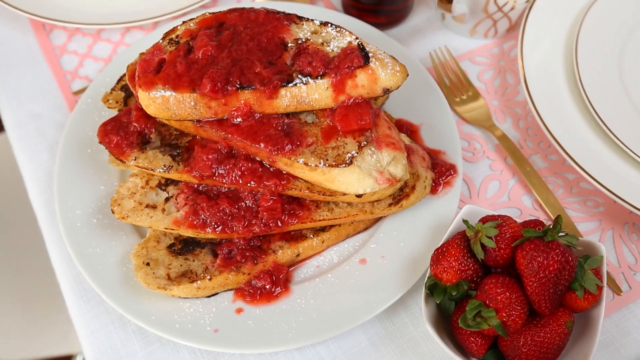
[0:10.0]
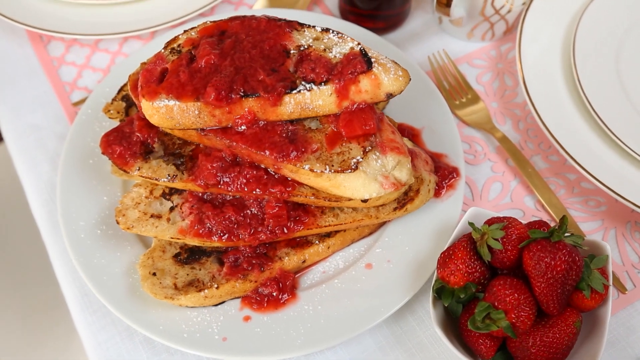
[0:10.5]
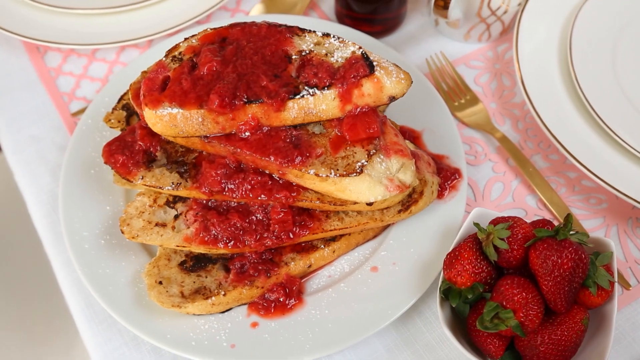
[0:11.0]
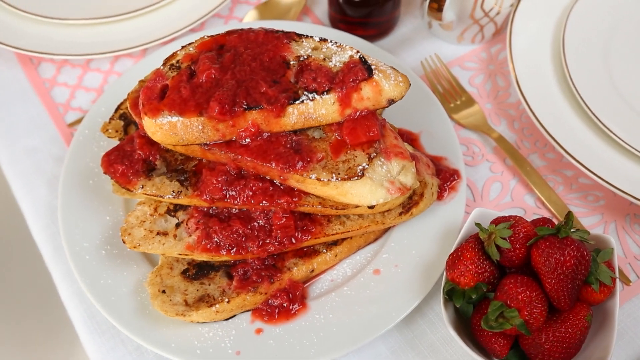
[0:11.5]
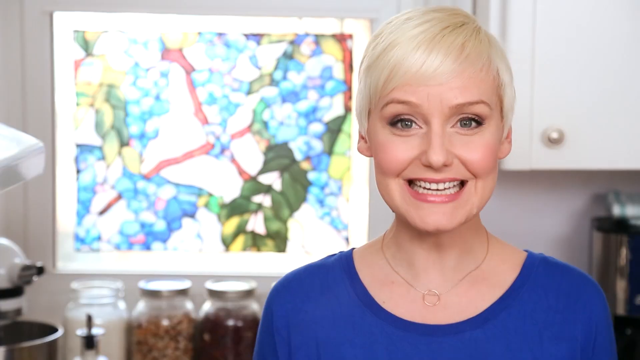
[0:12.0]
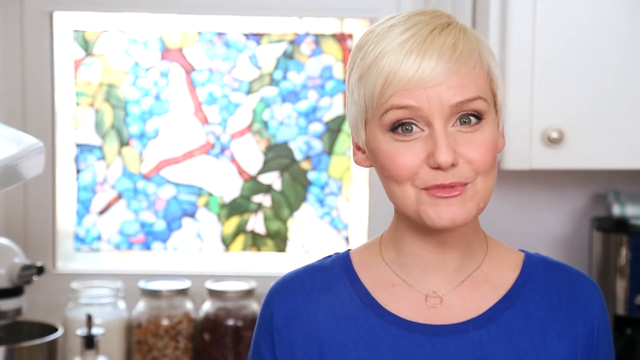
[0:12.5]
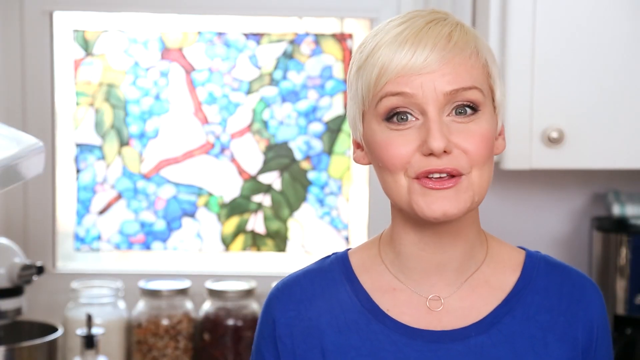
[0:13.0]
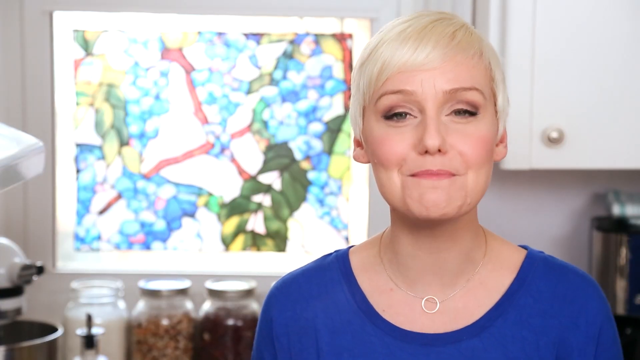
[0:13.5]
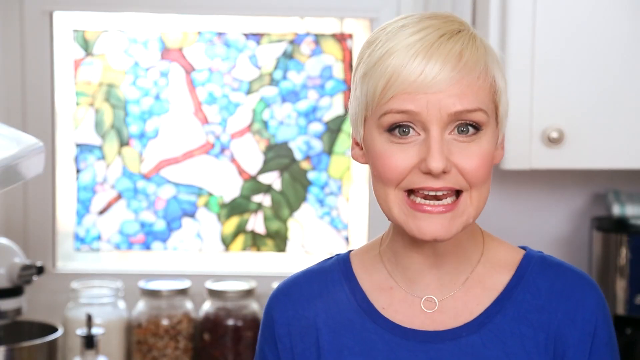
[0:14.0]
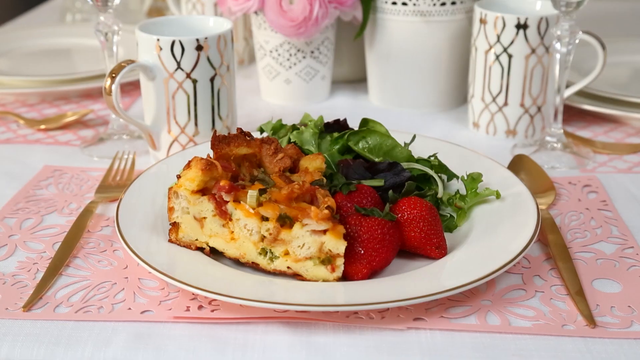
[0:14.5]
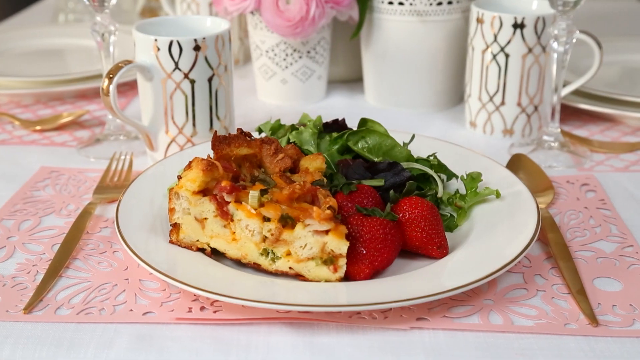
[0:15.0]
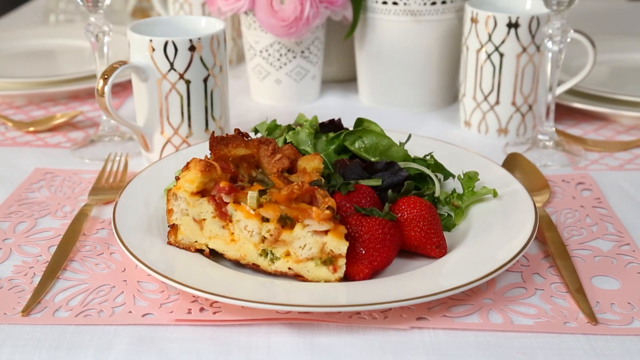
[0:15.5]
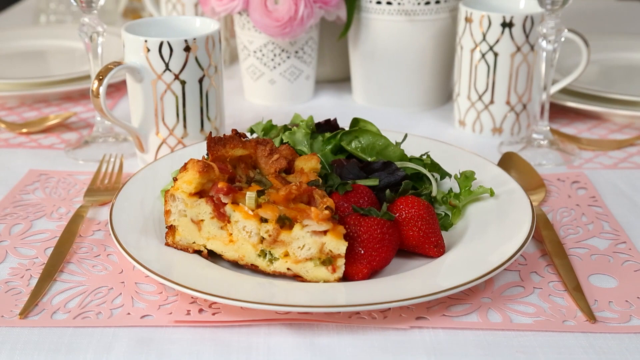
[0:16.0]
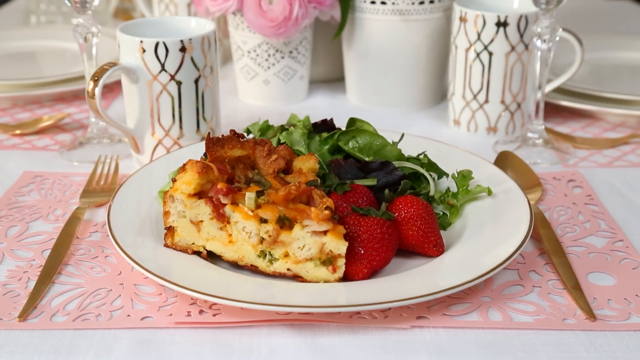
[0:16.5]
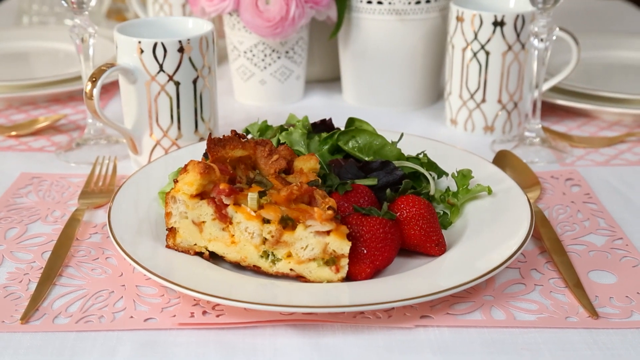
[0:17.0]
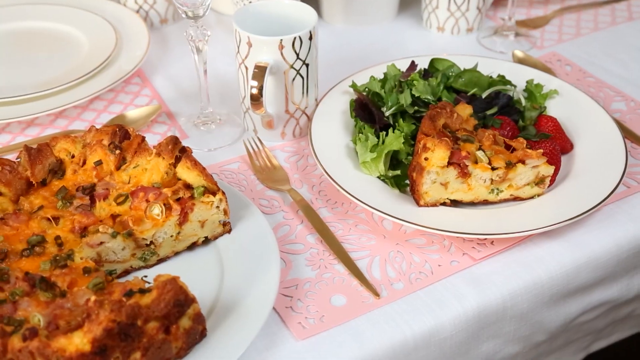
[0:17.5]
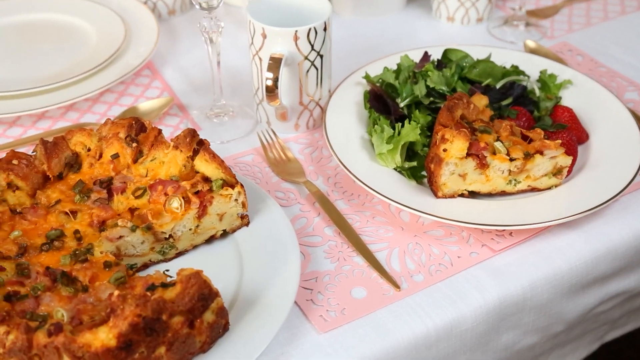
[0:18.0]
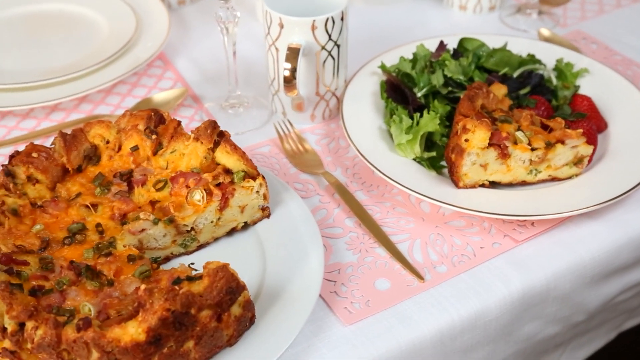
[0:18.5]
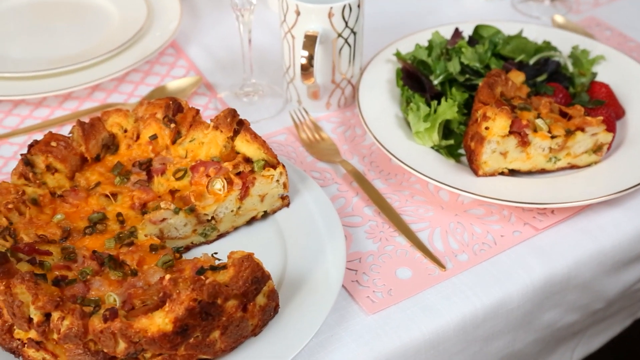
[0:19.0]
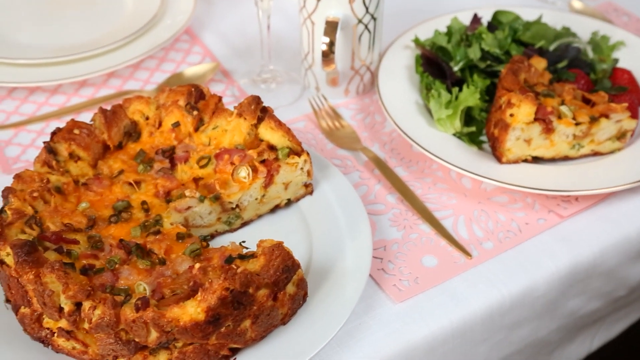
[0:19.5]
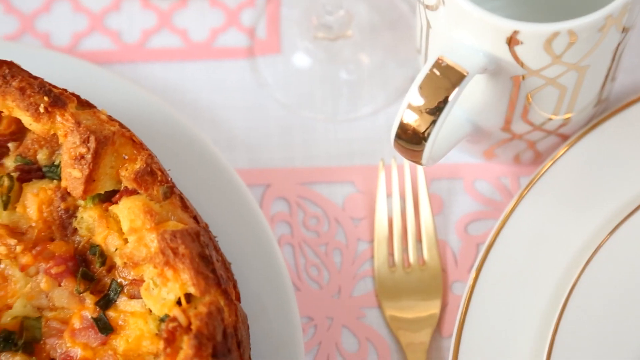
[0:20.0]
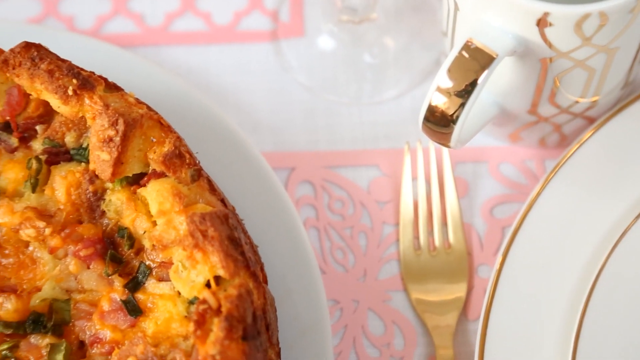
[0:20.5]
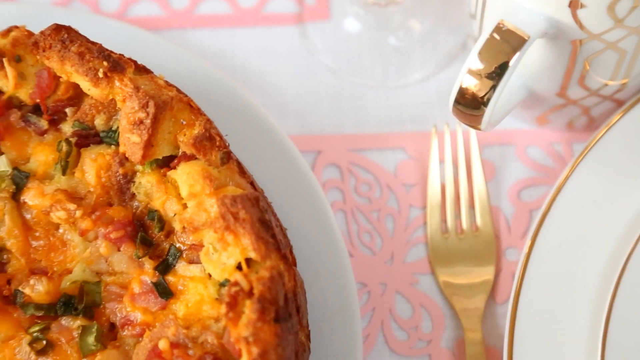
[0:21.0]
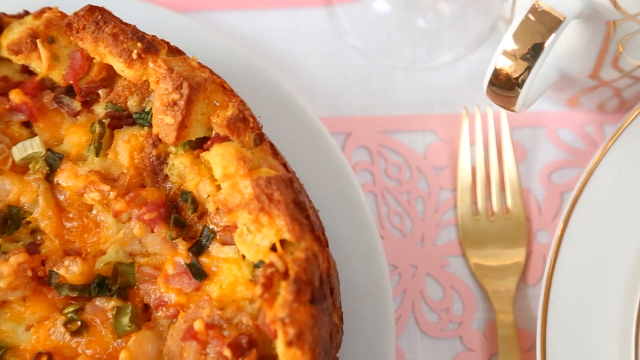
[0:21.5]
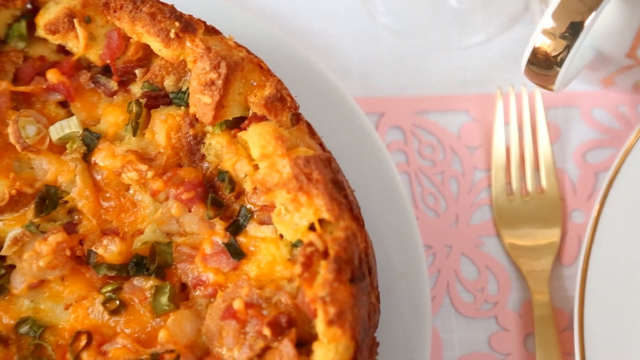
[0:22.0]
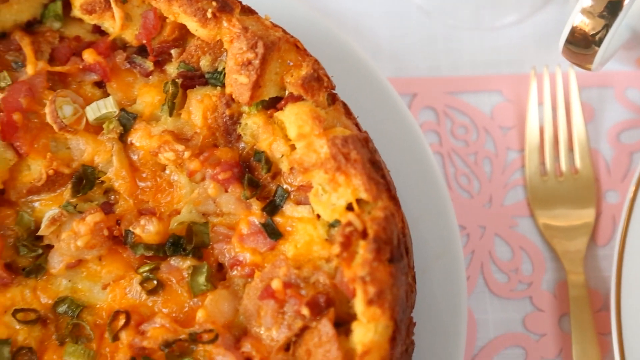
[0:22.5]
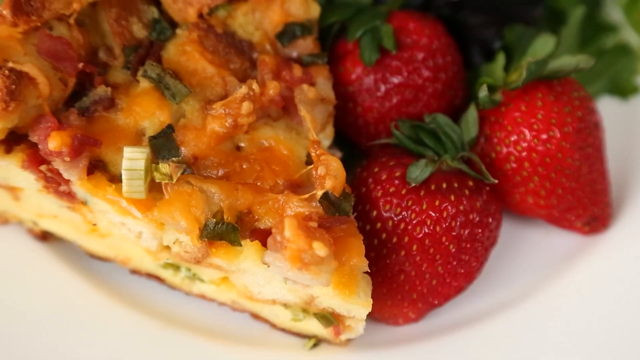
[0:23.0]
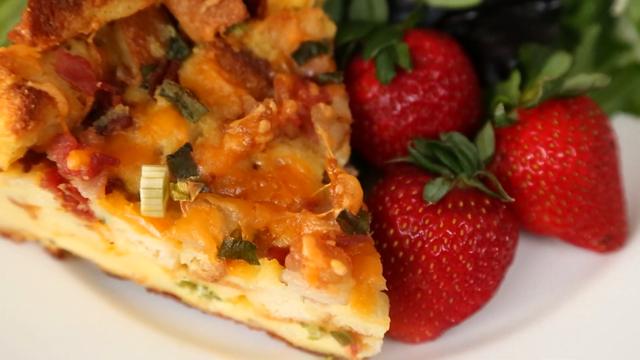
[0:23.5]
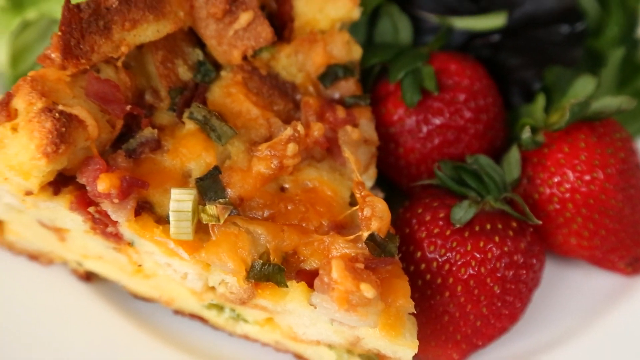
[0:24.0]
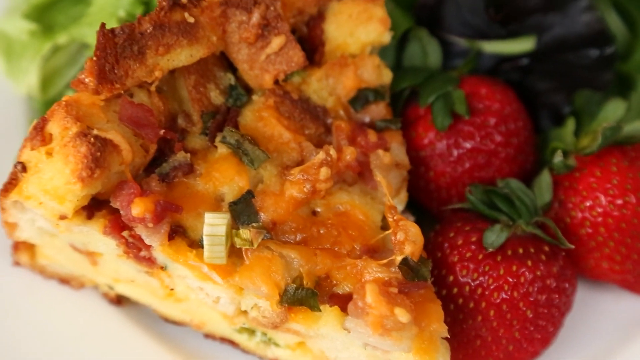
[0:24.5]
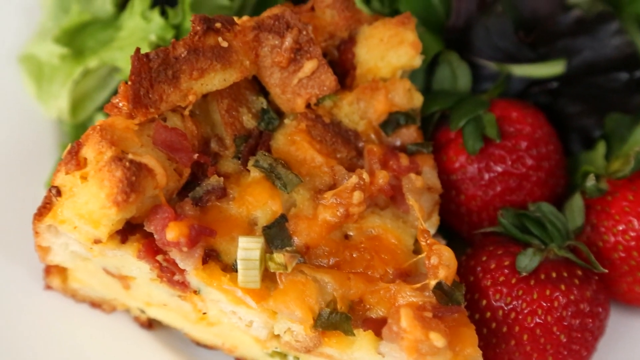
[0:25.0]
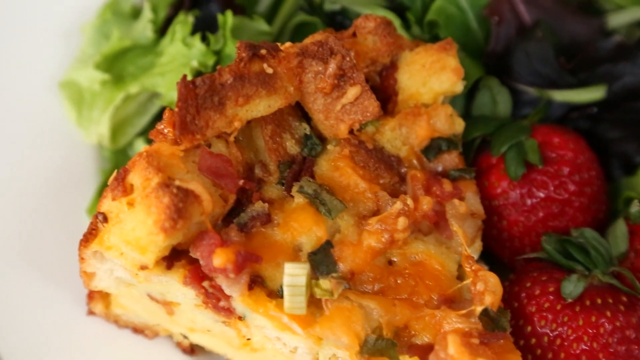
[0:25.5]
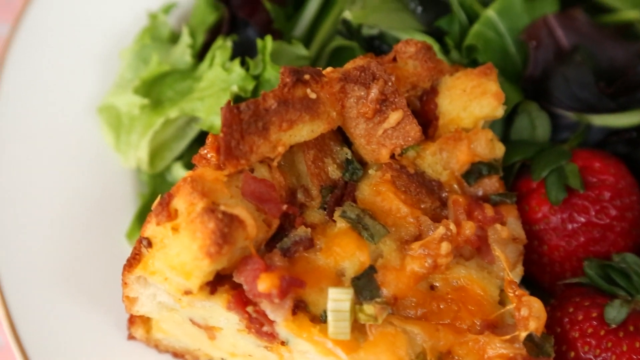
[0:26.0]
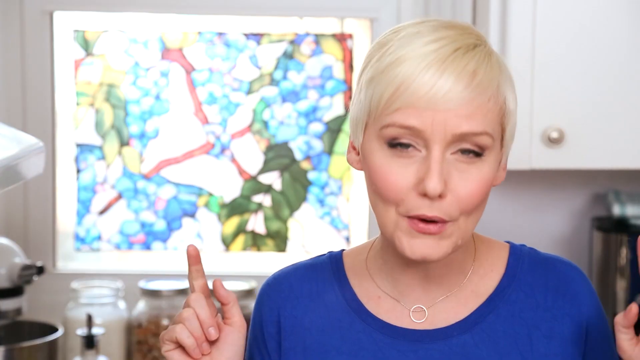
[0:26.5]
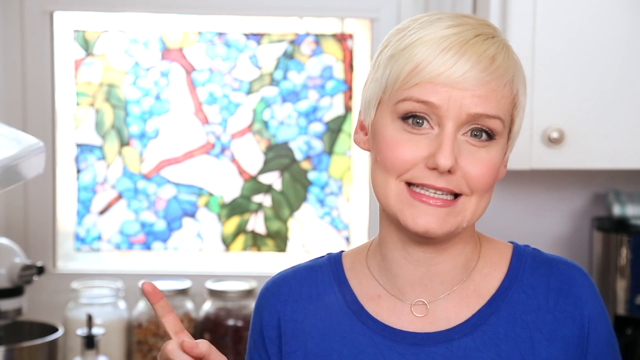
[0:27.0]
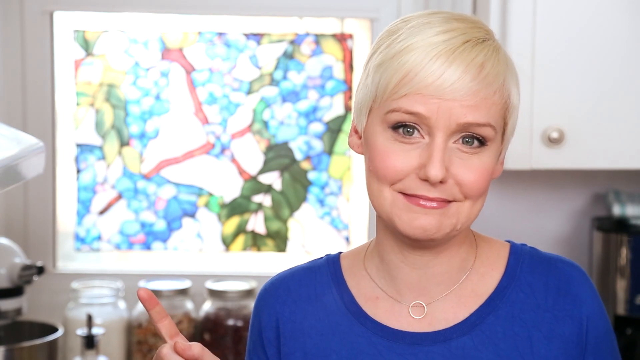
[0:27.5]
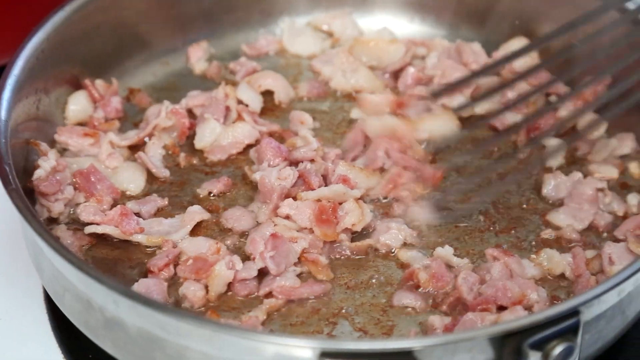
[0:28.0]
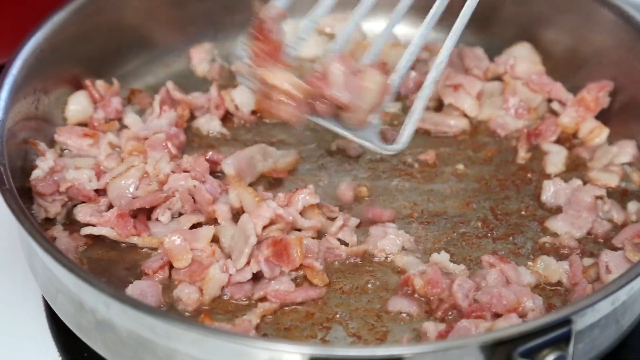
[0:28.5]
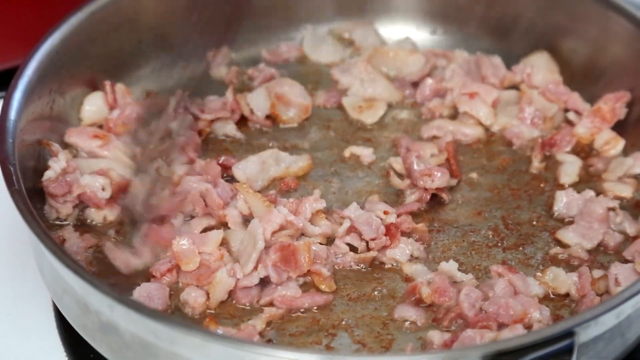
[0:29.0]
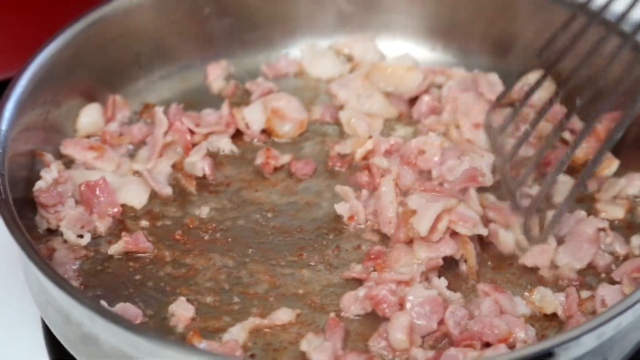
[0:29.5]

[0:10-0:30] A vertically stacked plate of bruschetta has tomatoes and tomato sauce coming down on top of the pile, with a small bowl of strawberries and a gold fork next to it. A woman speaks; she is white, with platinum blonde hair, a fair amount of makeup, a blue top with a kind of rounded neckline, and a necklace with a circle. A plate holds some quiche, strawberries and a little salad; behind it are two coffee mugs with kind of golden-colored designs and gold accents on the handles, and the silverware, a fork and spoon, is also gold. An overhead shot shows a full, kind of golden brown quiche with one slice missing, maybe with some tomatoes and chives on top. A close-up then shows it next to the strawberries with the salad behind it. The woman speaking returns; there is a stained glass window behind her, she looks to be in a kitchen setting, and there are white cabinets. Then a pan of chopped, diced bacon is being fried.